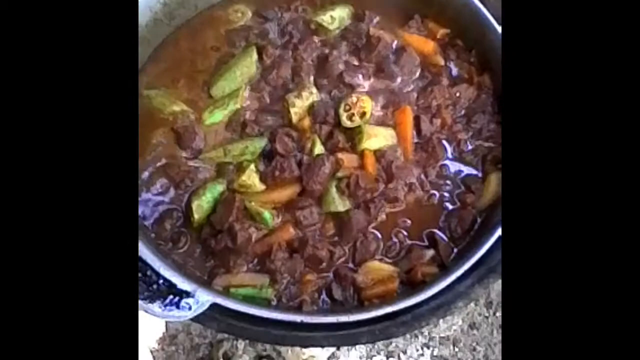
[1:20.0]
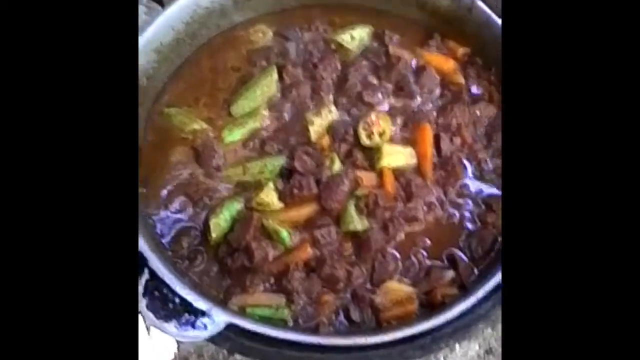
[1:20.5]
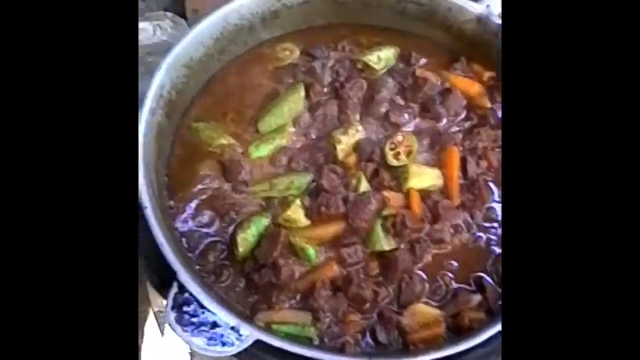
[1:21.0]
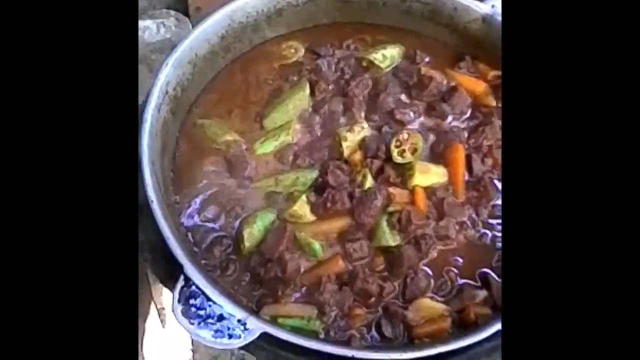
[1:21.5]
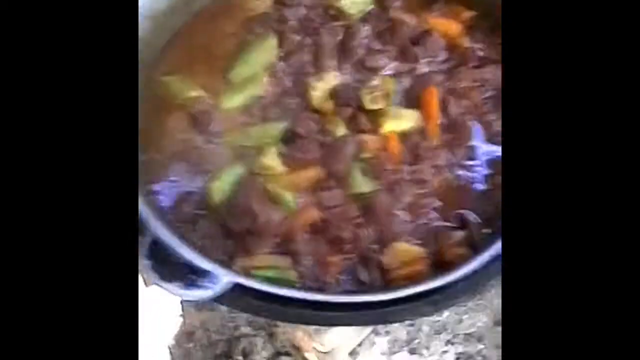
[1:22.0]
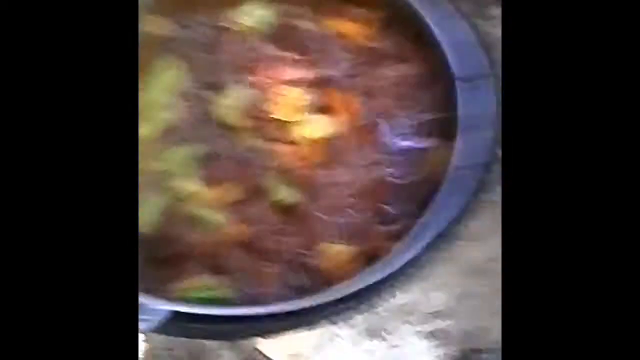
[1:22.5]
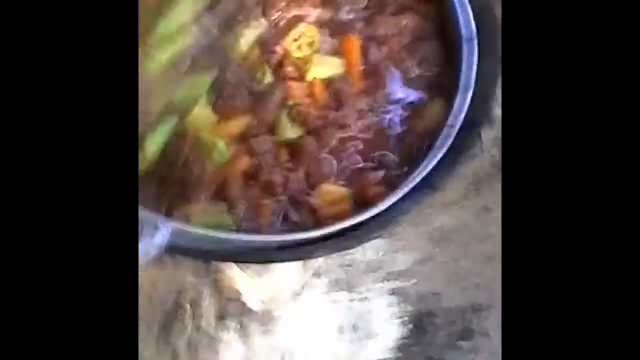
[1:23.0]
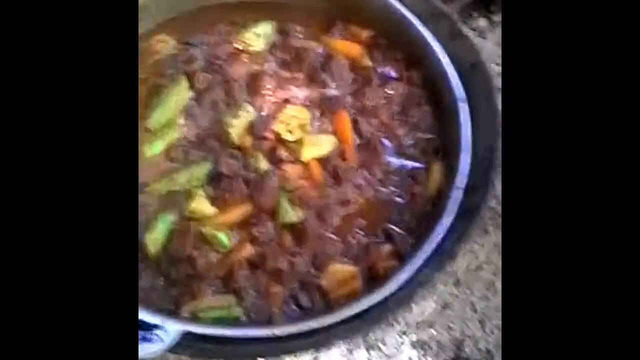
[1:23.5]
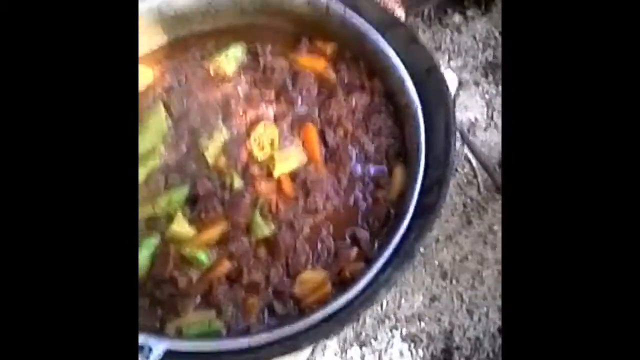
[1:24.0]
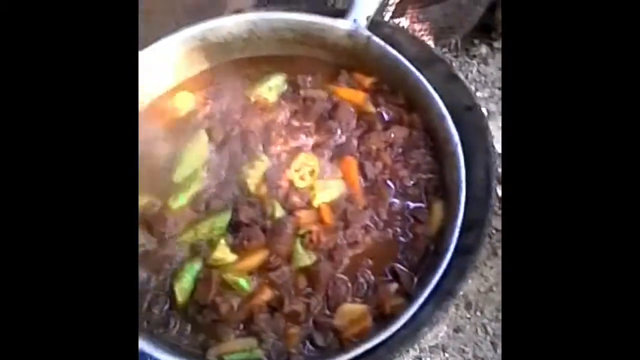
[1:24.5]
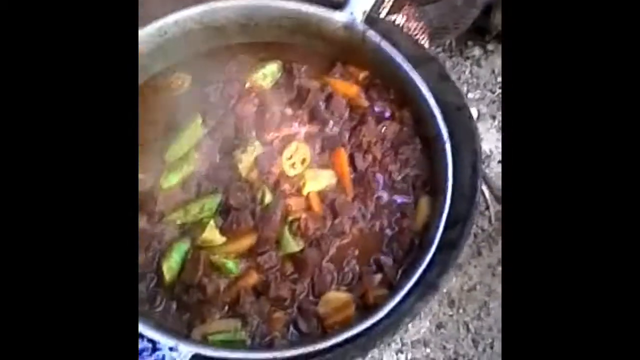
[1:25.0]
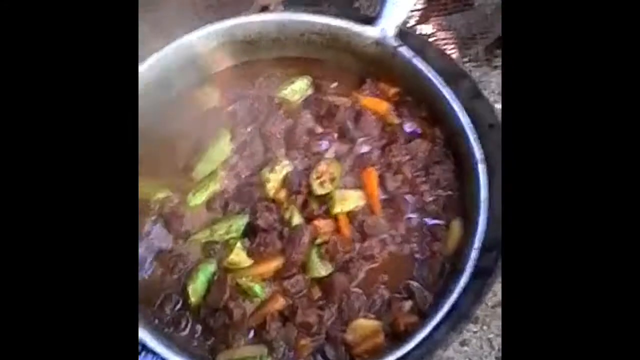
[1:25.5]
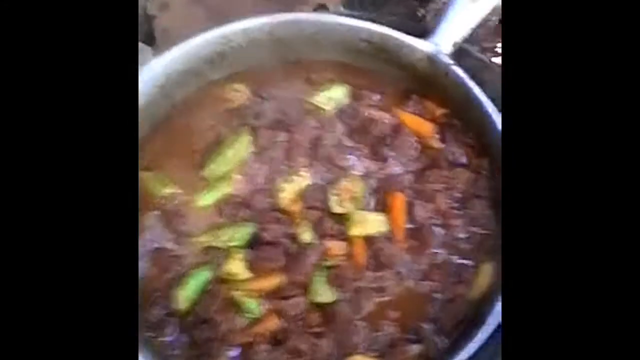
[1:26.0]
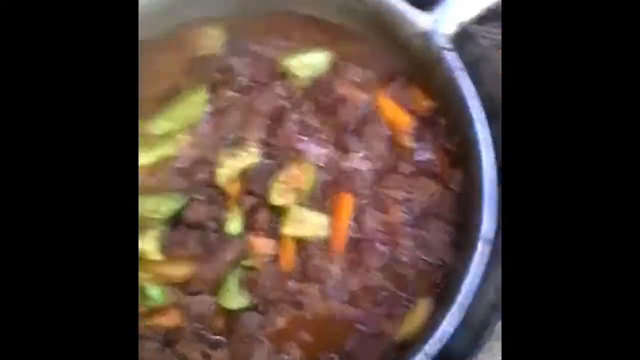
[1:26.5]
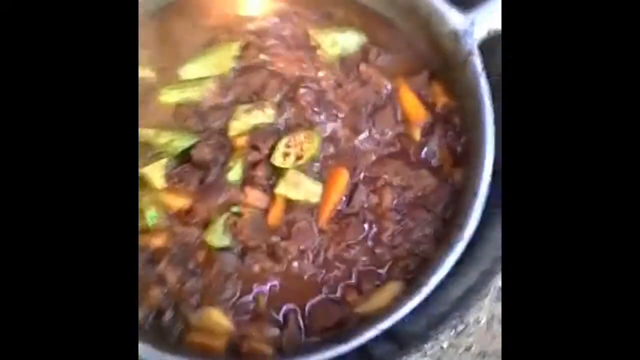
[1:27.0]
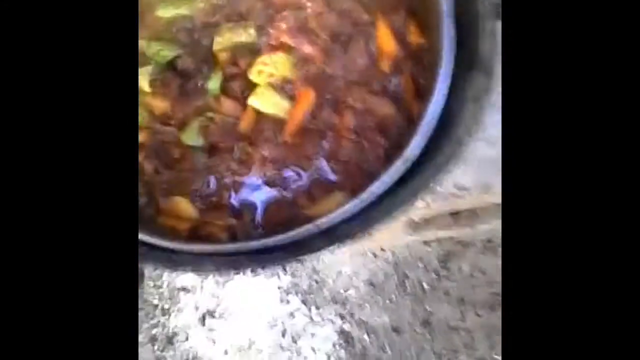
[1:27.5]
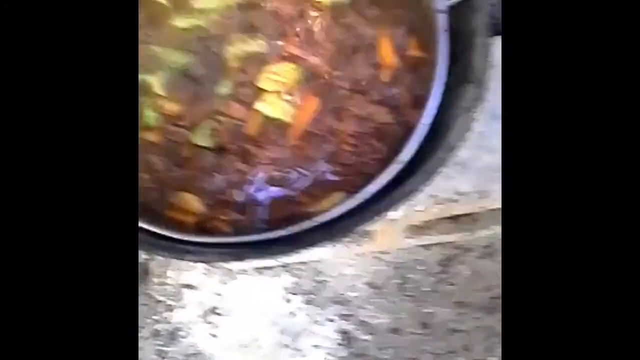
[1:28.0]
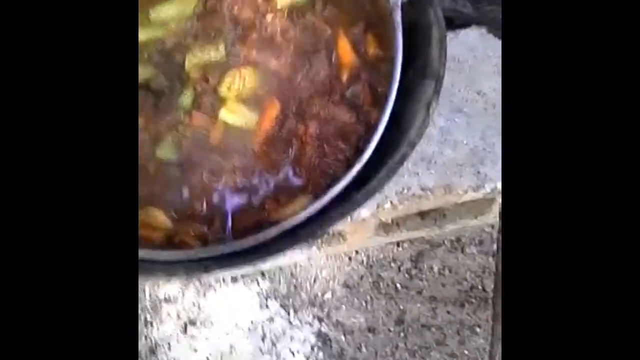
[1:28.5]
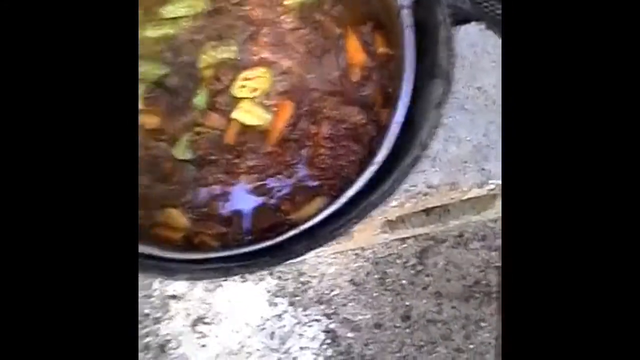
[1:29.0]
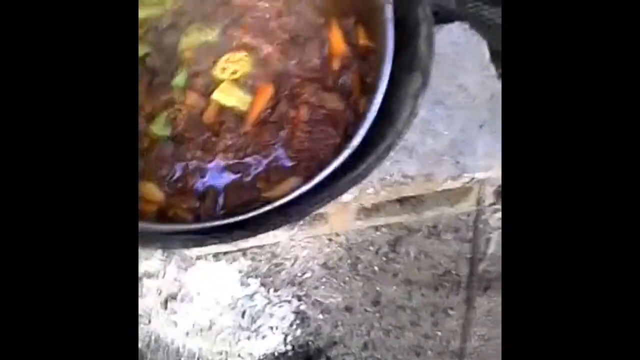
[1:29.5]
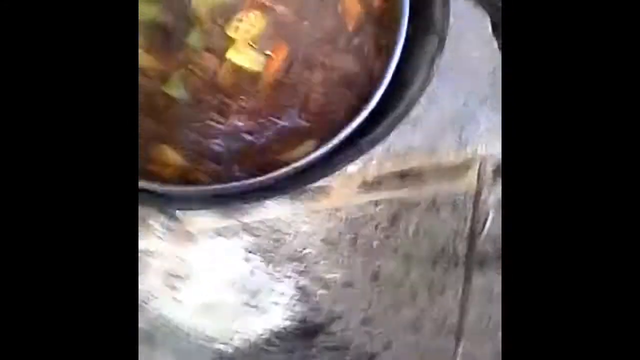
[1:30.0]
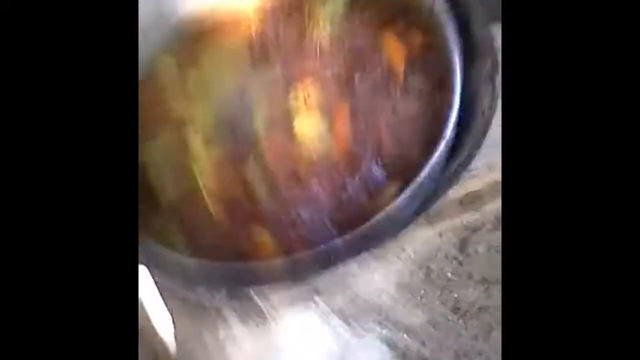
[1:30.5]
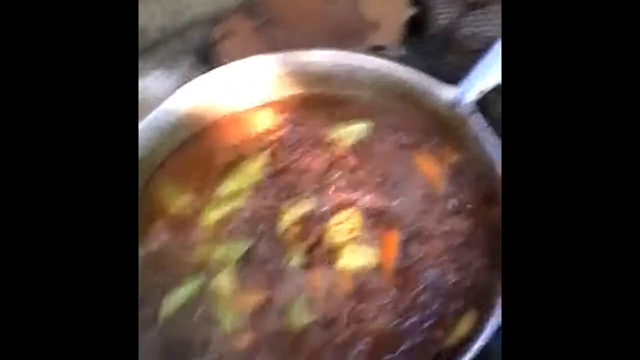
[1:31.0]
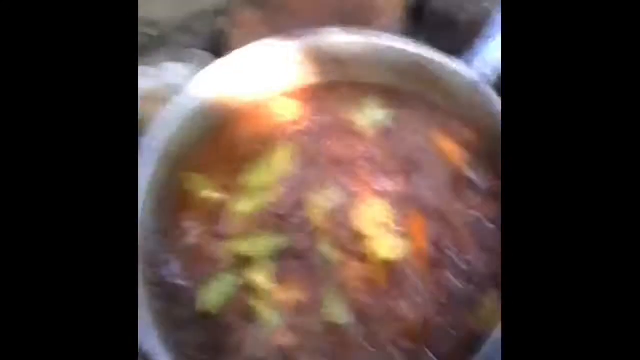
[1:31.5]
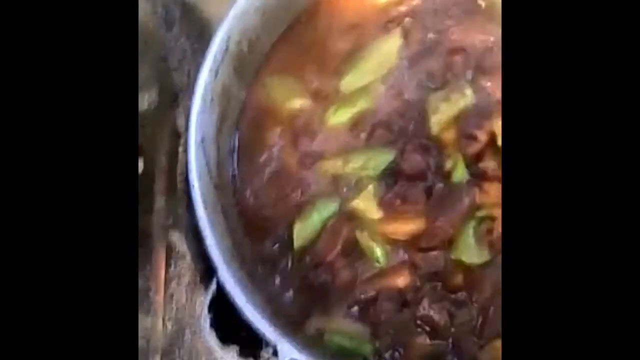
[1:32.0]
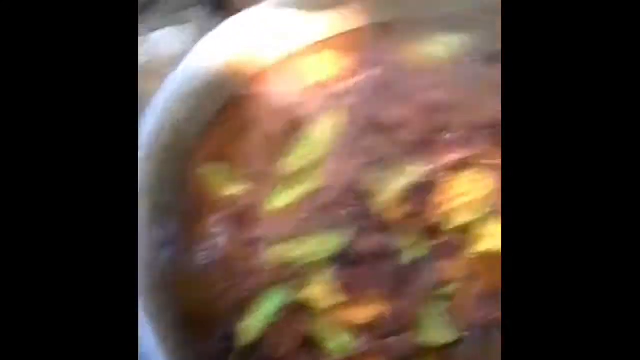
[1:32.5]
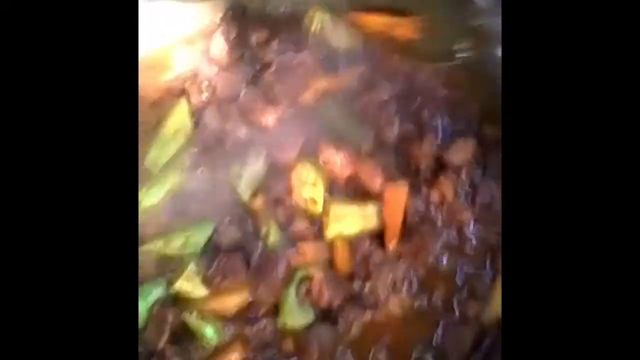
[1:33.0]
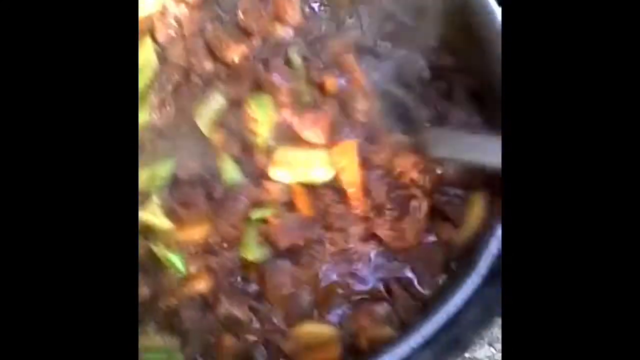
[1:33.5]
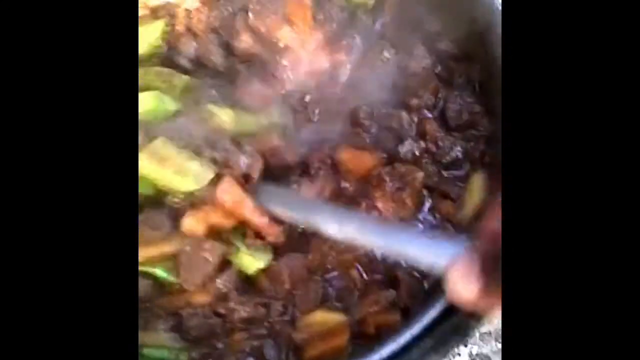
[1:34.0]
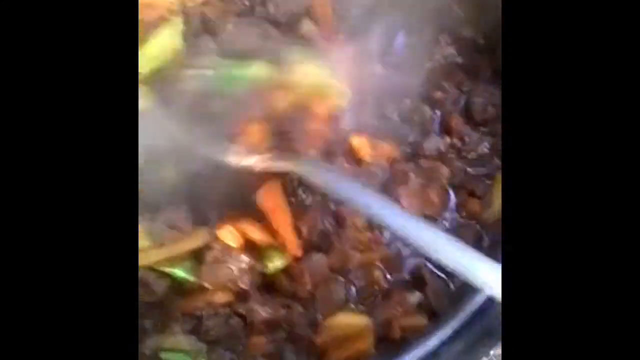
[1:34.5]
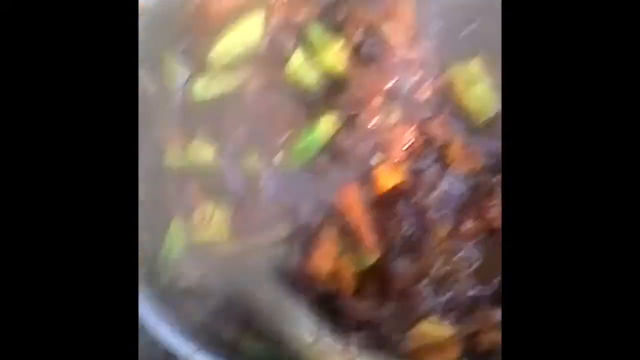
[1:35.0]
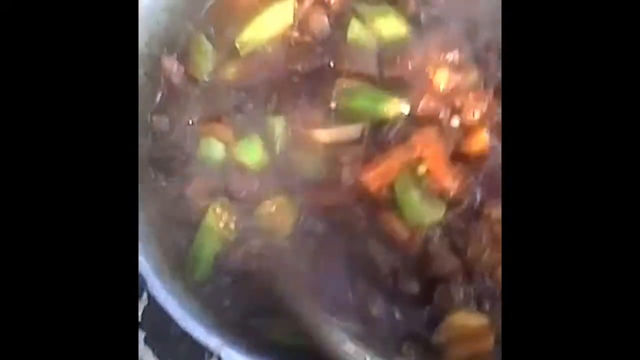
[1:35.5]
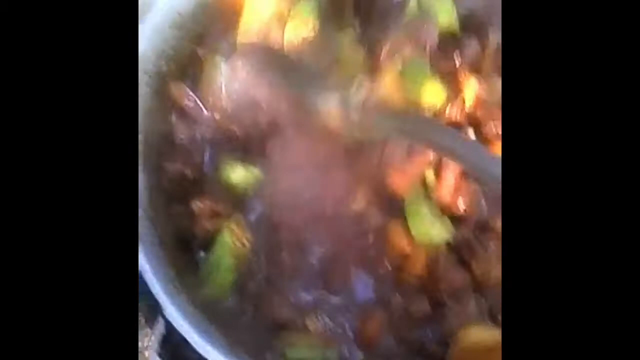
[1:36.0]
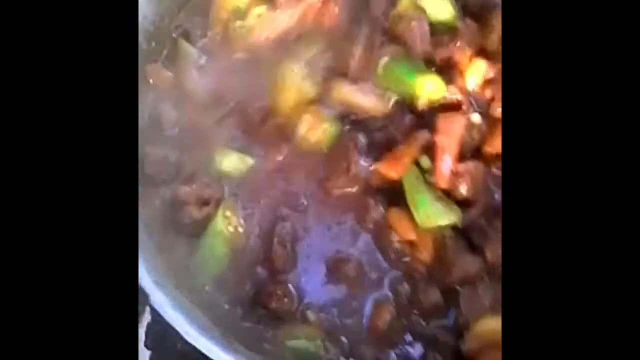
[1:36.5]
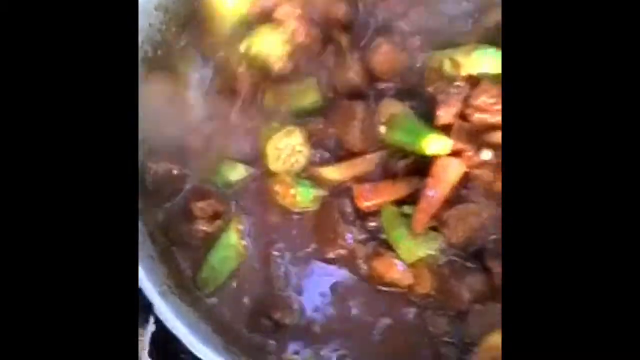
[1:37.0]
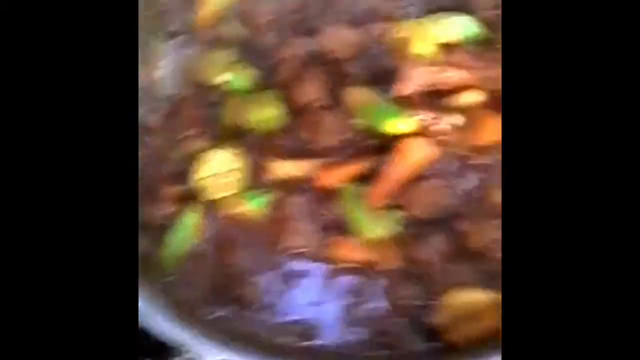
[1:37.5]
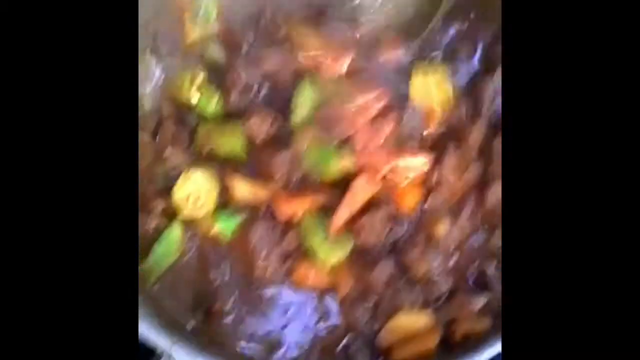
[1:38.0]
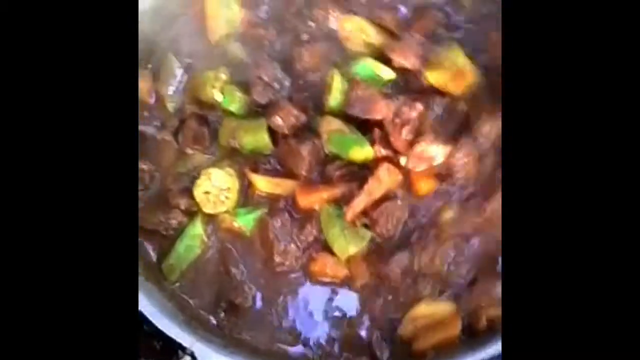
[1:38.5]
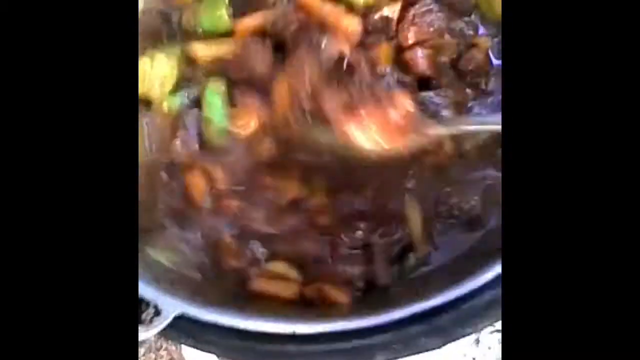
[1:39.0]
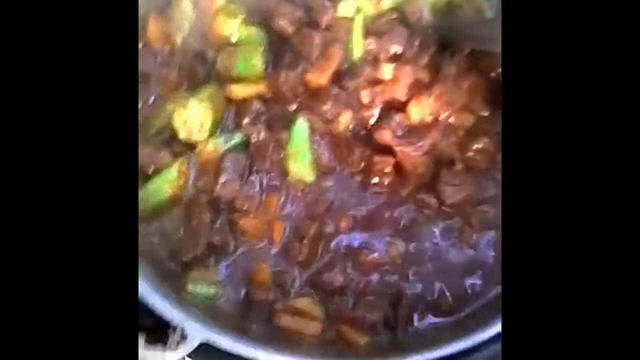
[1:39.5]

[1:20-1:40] The final product looks like a stew of some kind, with slivers of carrot in a triangular shape, cubes of meat, asparagus or green beans of some kind, and maybe some potatoes. There is a little steam, not as much as before. A hand moves a little as the camera circles around, looking at different parts of the pot. Then it is stirred with a spoon, flipped over, shuffled from left to right, spun and turned over. At the bottom is a half-circle handle connected to the side, and a longer handle extends out on the right side. The pot appears to be in some other holder, probably with some kind of heat source underneath. The camera jostles around a lot, making details hard to see, and the clarity is not good.